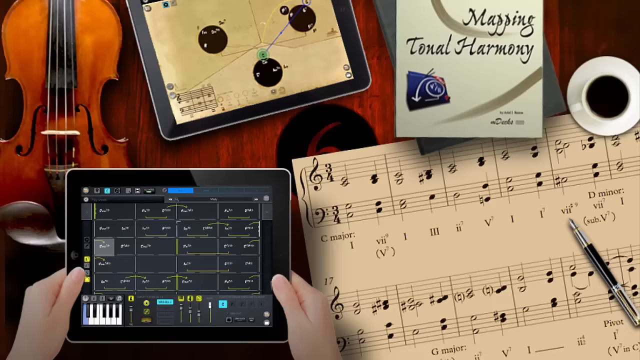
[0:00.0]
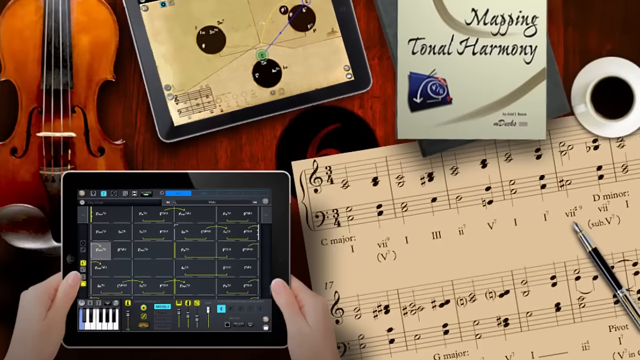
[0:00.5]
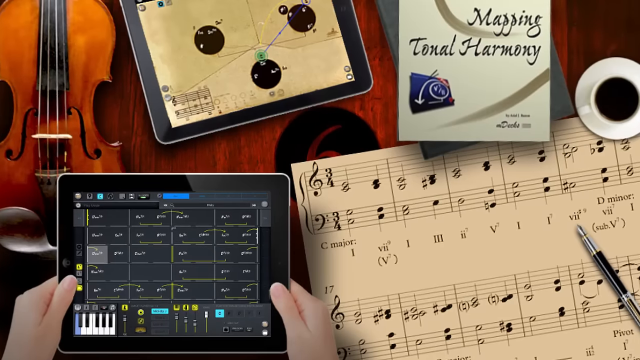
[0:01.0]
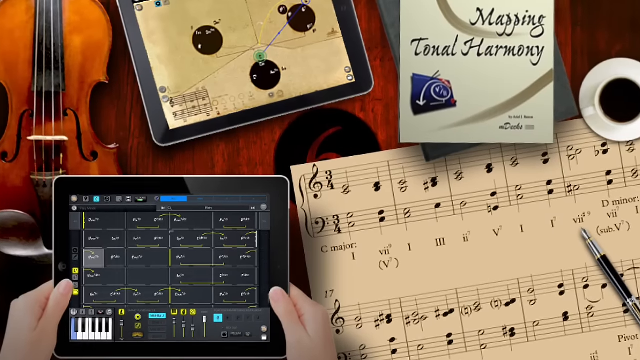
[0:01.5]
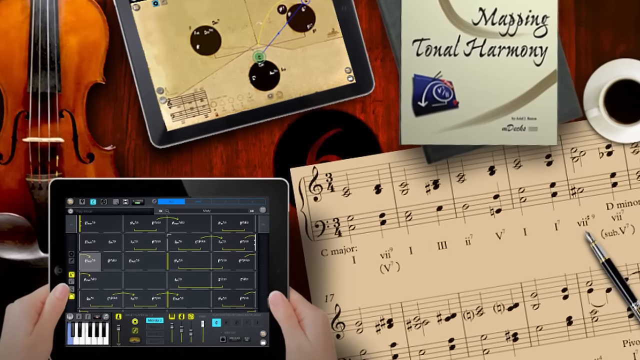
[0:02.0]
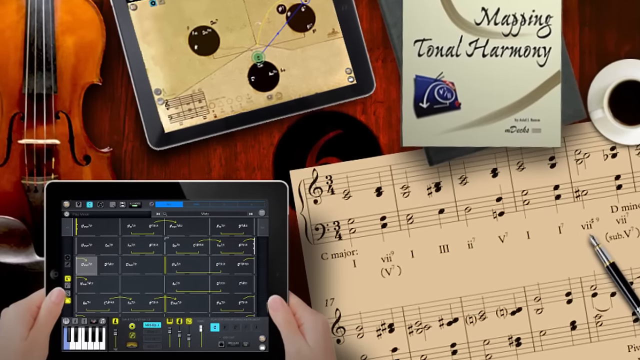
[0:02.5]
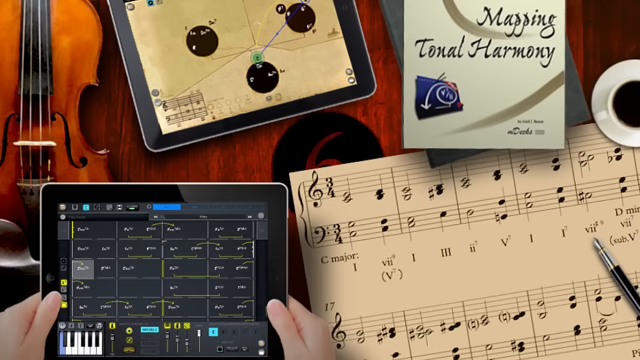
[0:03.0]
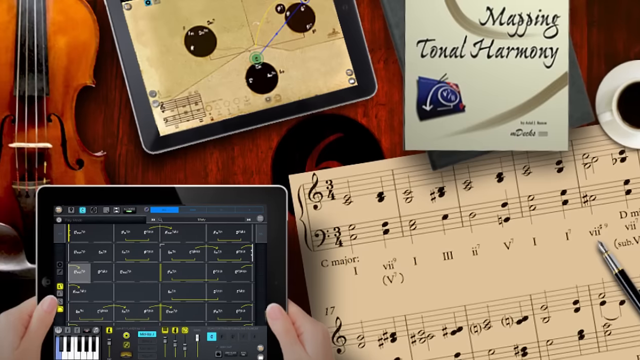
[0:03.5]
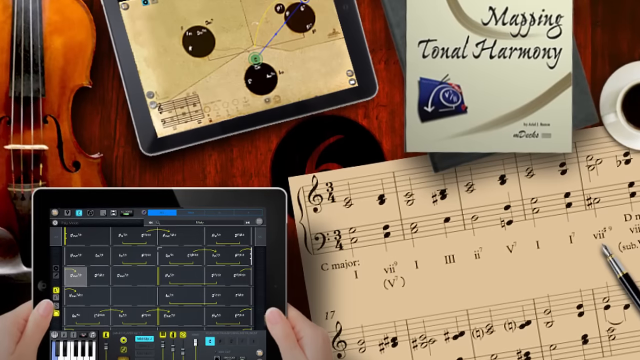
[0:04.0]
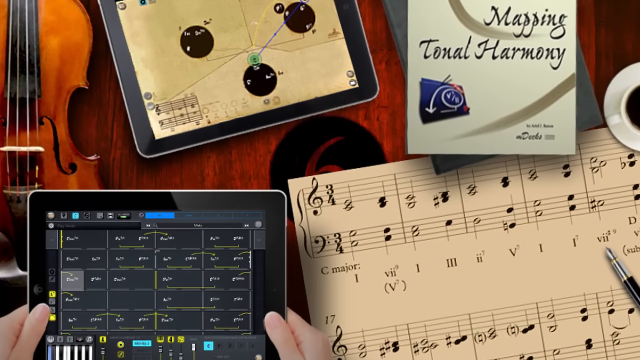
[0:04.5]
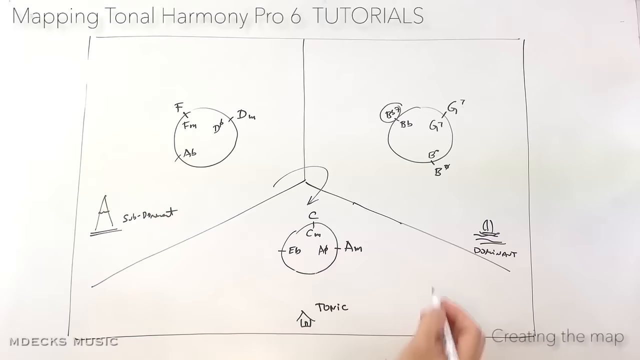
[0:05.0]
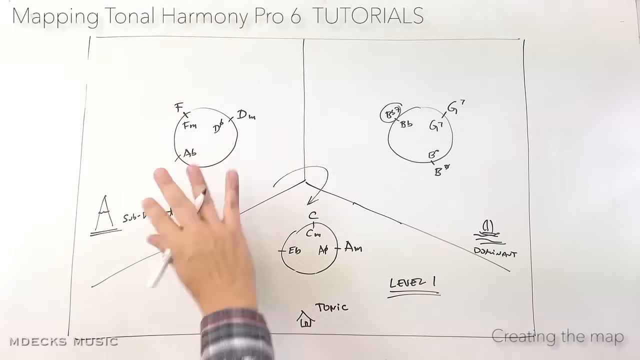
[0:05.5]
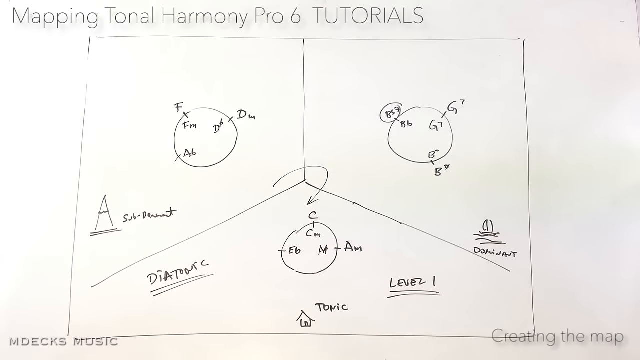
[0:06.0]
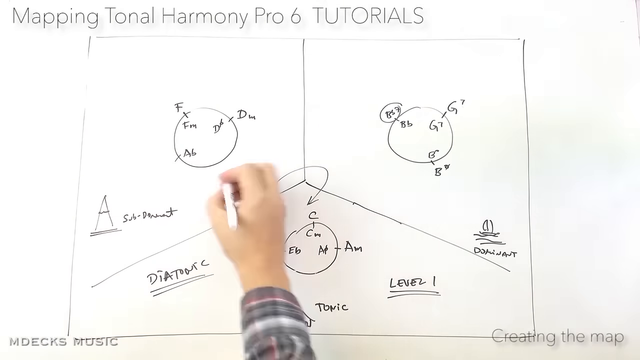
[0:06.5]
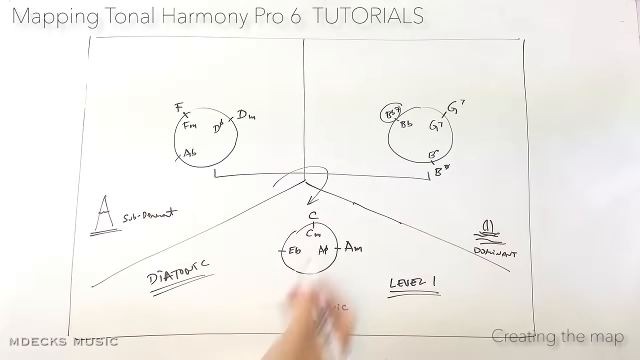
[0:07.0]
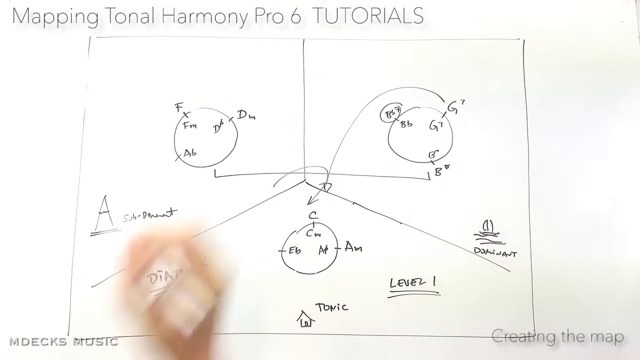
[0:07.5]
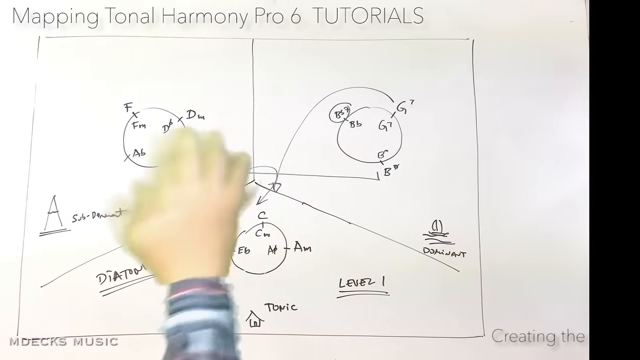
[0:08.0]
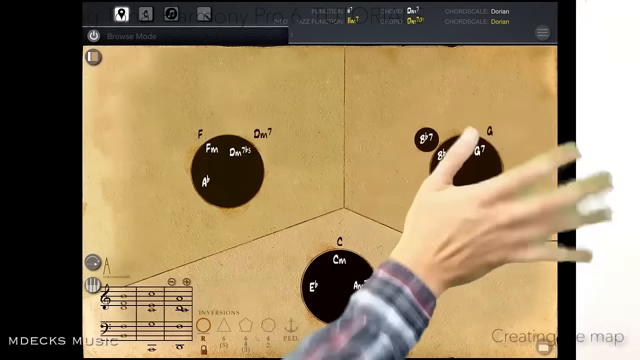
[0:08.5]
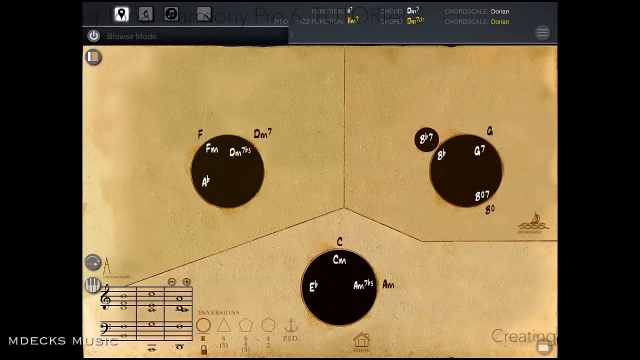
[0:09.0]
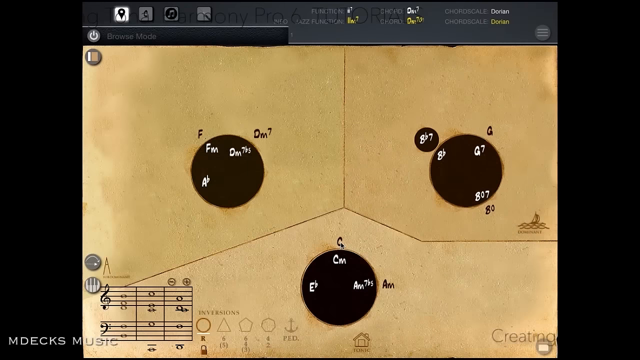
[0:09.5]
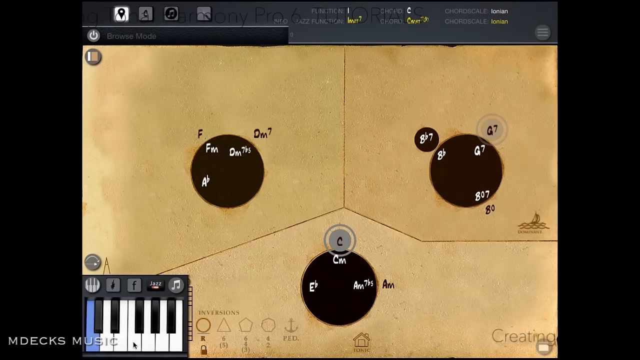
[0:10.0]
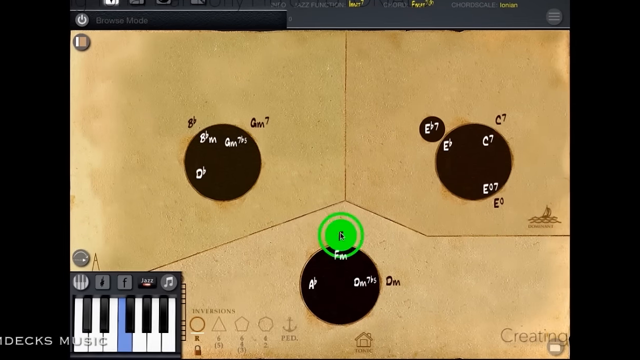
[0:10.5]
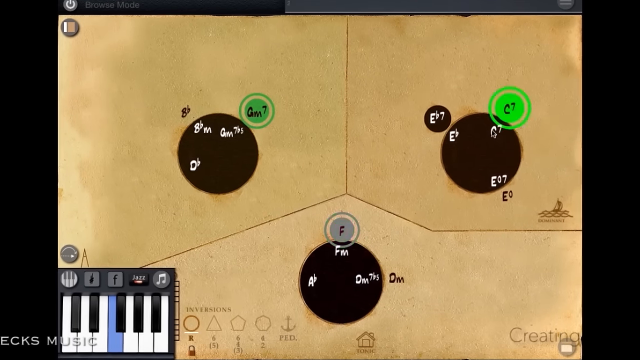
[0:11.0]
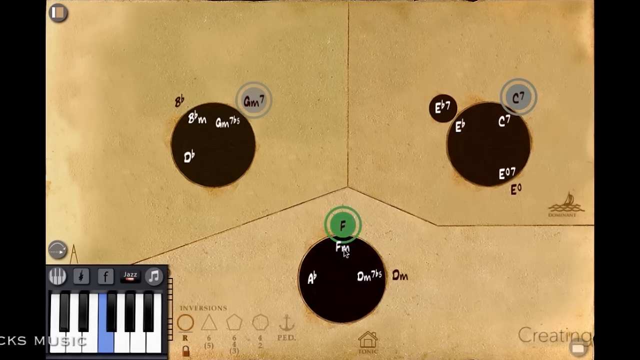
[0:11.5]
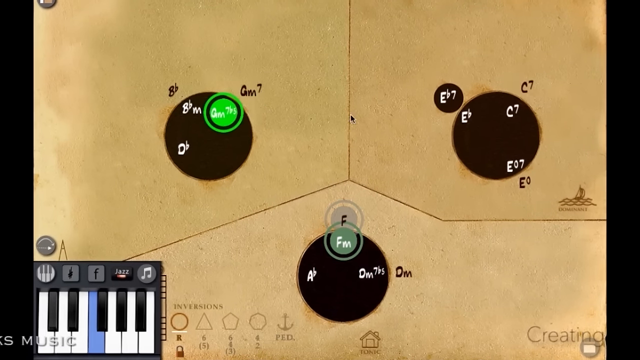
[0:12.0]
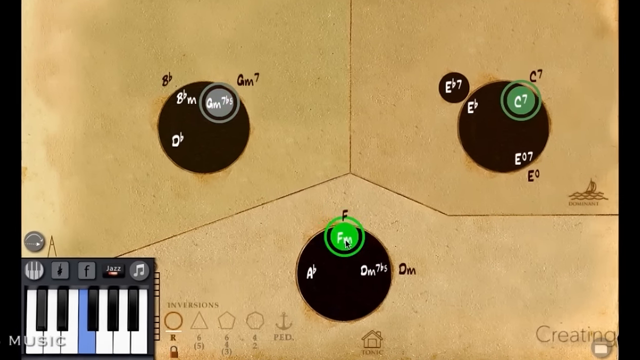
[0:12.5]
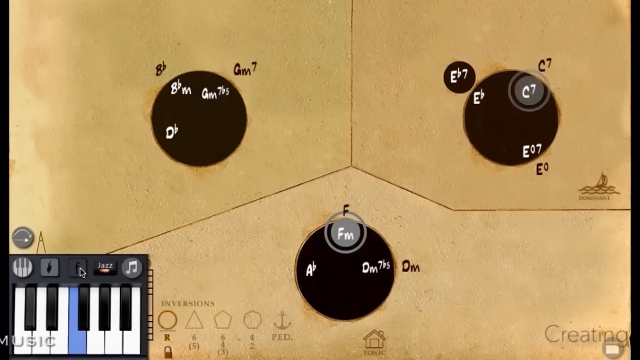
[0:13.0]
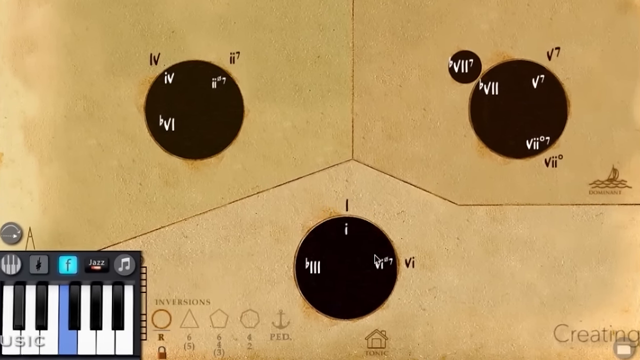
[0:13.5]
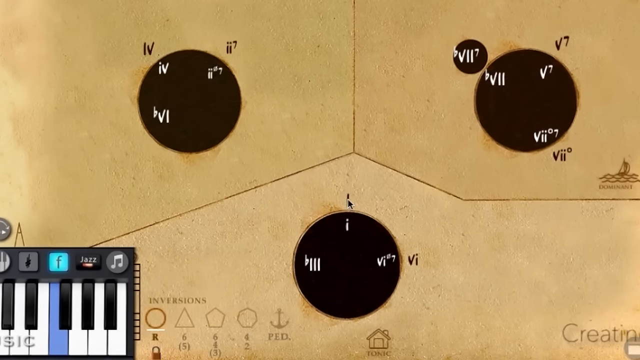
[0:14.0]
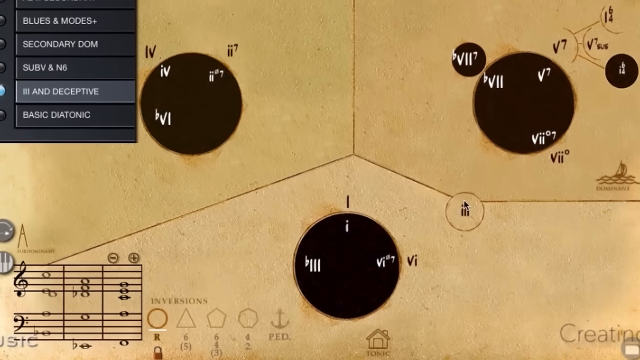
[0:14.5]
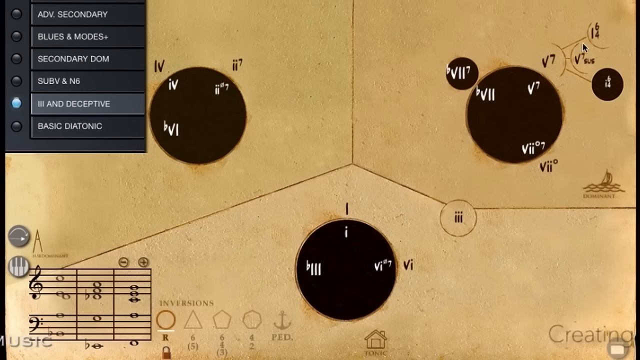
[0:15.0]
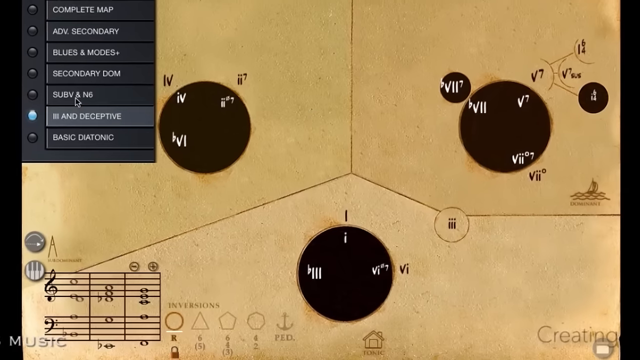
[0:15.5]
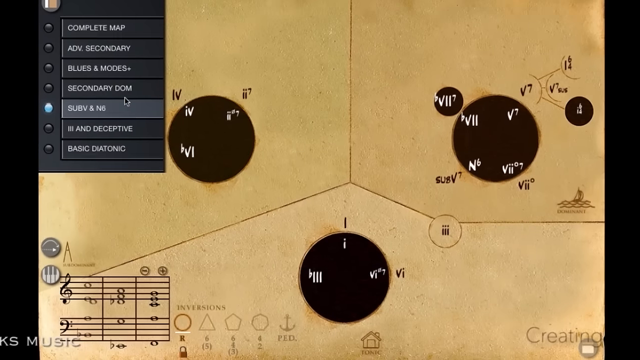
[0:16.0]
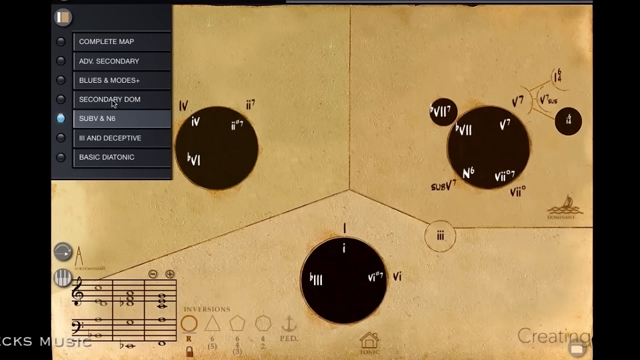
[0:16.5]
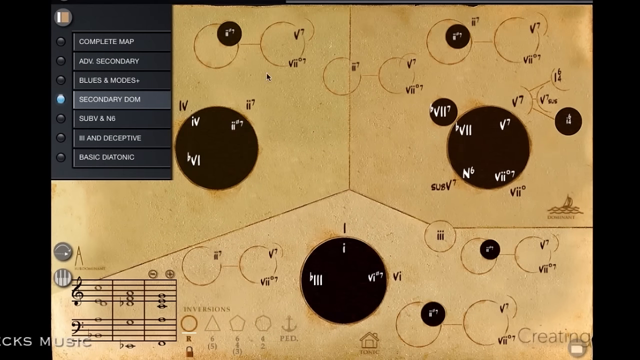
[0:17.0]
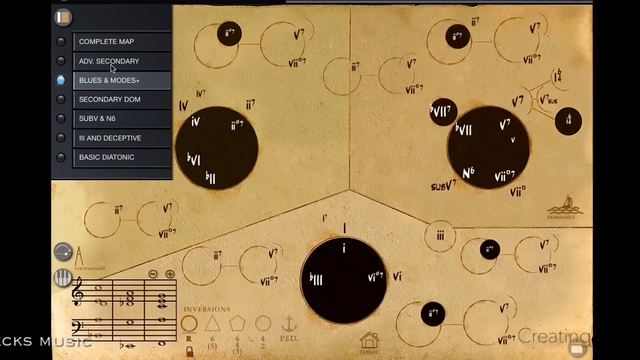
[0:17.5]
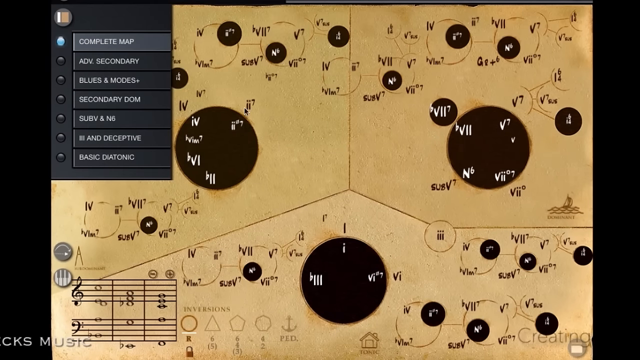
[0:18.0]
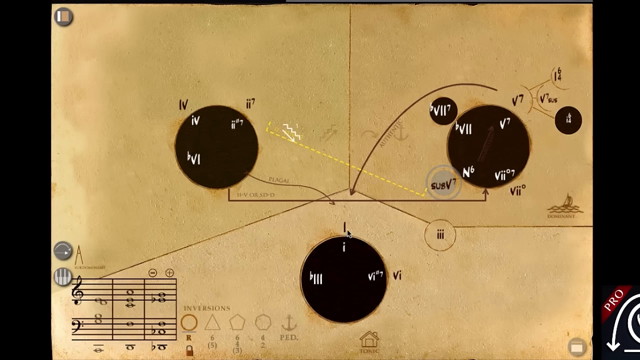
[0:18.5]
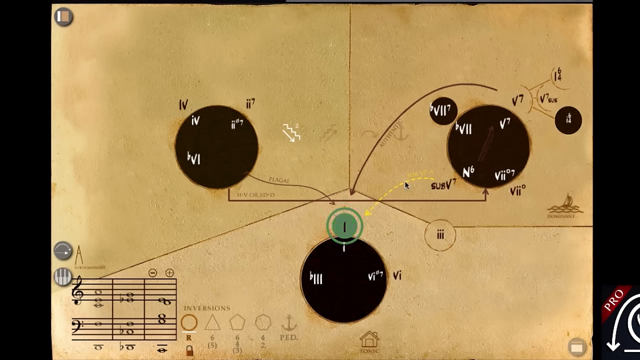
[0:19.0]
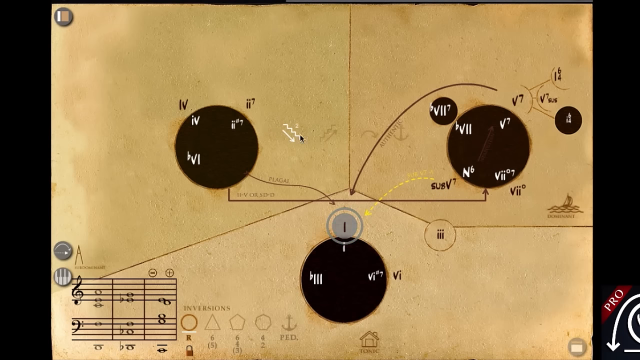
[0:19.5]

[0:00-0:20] The video opens on a still image of a wooden tabletop. At the bottom left, a pair of hands holds a tablet by both ends; the tablet appears to display some kind of chart. Above it, another tablet lies crooked on the table, and to the left of that there appears to be a violin or some other small string instrument. To the right of the held tablet is a music sheet, and above that are two books, one on top of the other; the top one appears to be titled Mapping Tonal Harmony. To the right of the books there appears to be a roll of tissue paper. The camera zooms in on the image very slowly, then the scene transitions to a large piece of white paper with some sort of diagram on it, apparently a cube with writing on its three visible sides. The cube's corner points toward the camera, viewed at roughly a 45-degree angle. The footage appears to be sped up, and a hand makes rapid gestures in front of the image. The paper then slides off the screen to reveal another similar diagram behind it that appears to be colored. A mouse pointer moves over the diagrams and highlights different circles, which have lettering on them. The pointer selects one of the letters above the bottom circle, and a menu appears on the left side of the screen with multiple buttons and lights to the left of the buttons; when an option is selected, the lights light up. Many circles briefly appear on the diagram and then disappear, and the sidebar is removed from view.